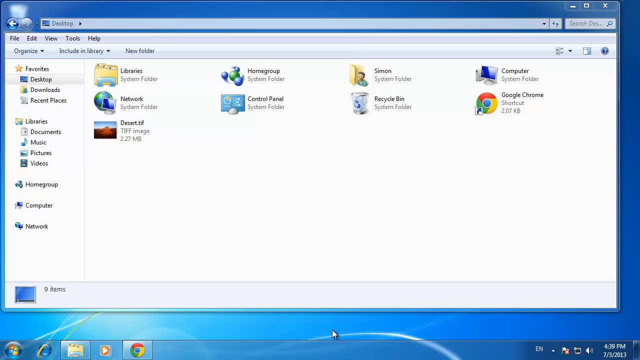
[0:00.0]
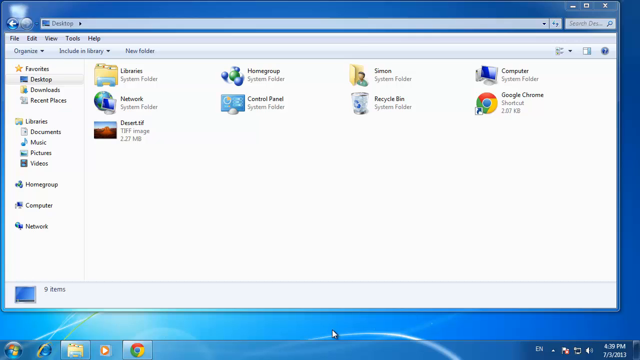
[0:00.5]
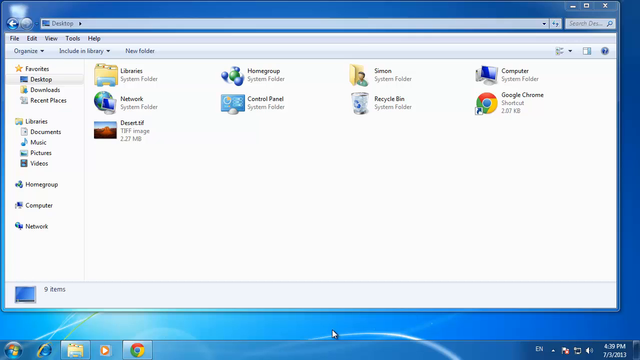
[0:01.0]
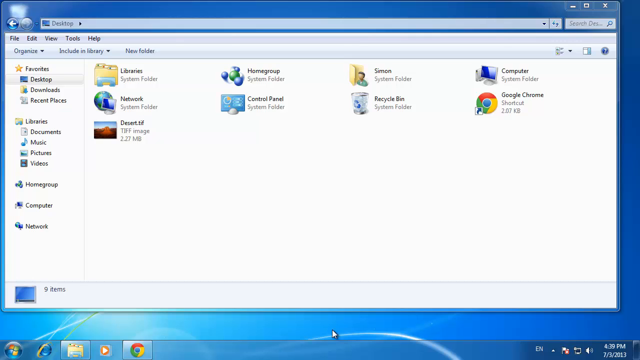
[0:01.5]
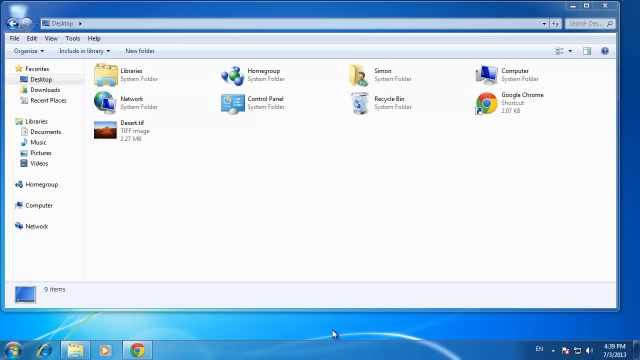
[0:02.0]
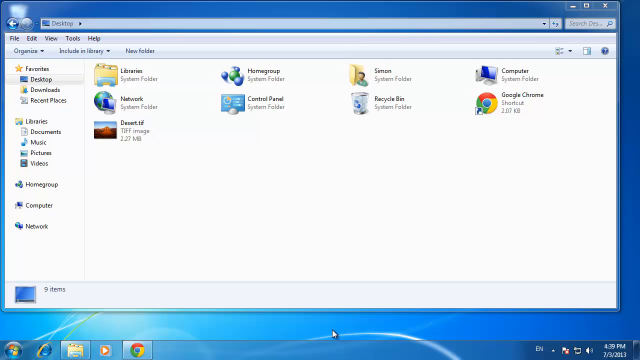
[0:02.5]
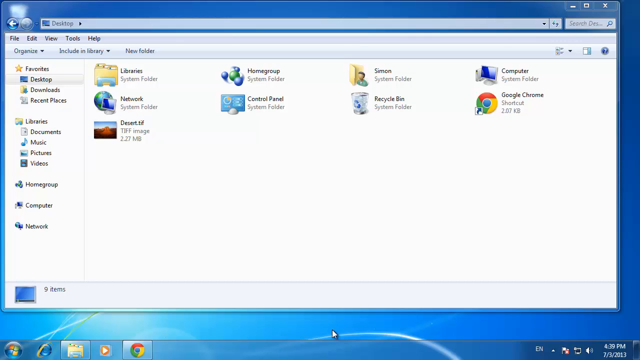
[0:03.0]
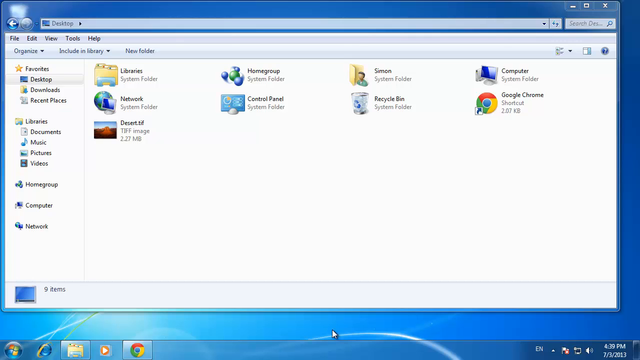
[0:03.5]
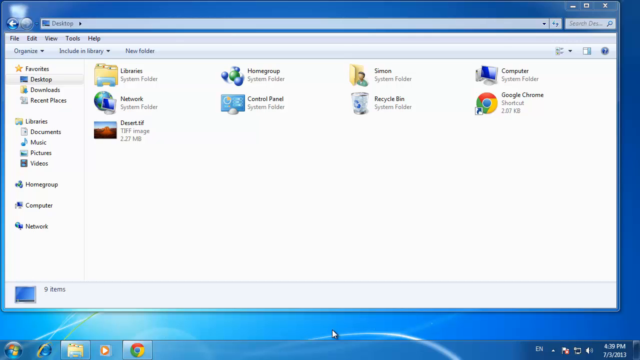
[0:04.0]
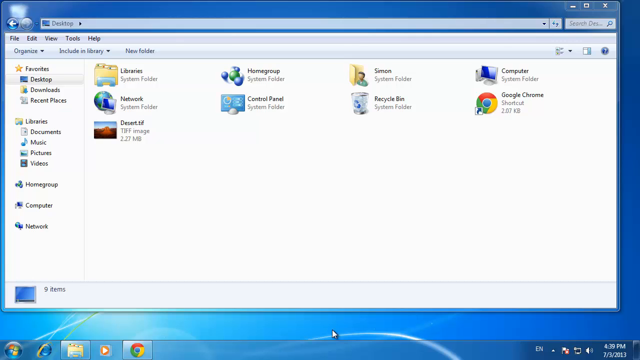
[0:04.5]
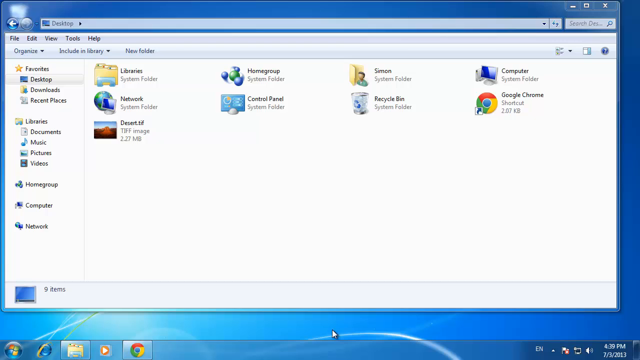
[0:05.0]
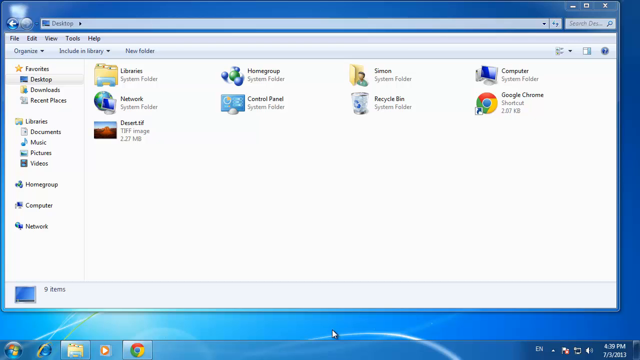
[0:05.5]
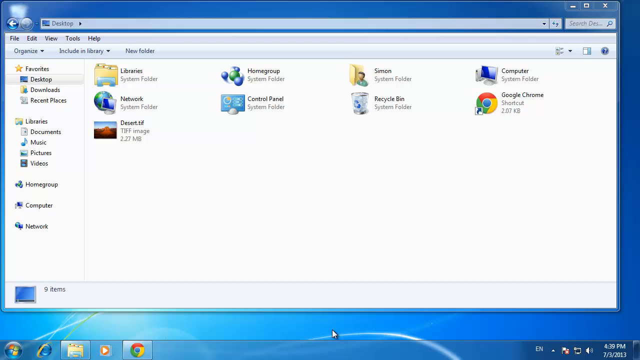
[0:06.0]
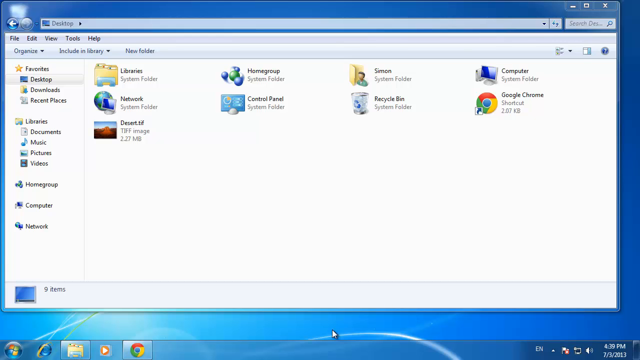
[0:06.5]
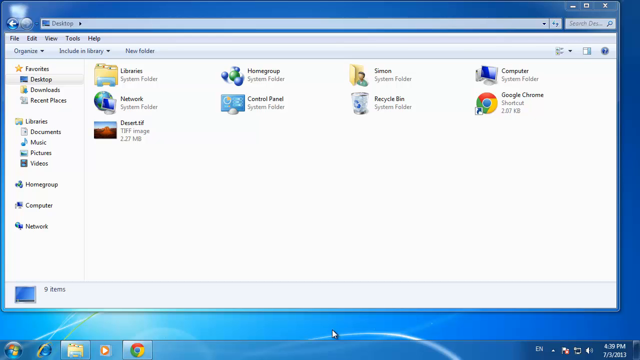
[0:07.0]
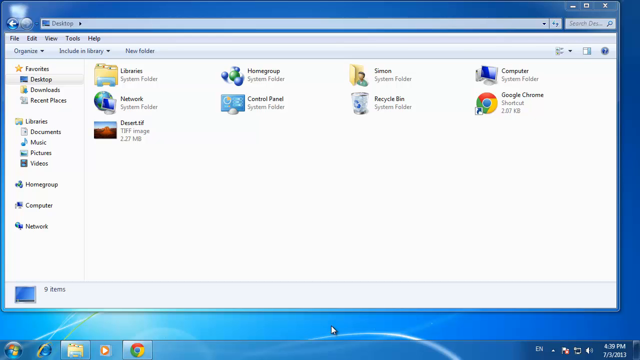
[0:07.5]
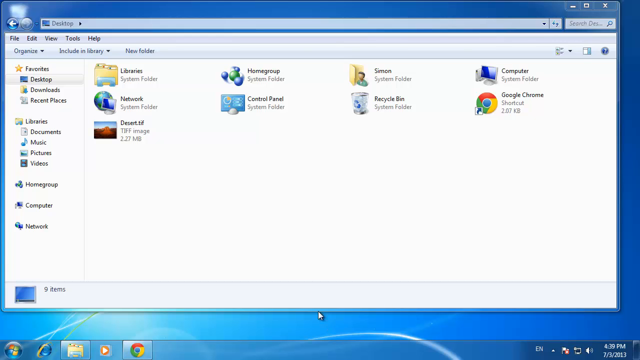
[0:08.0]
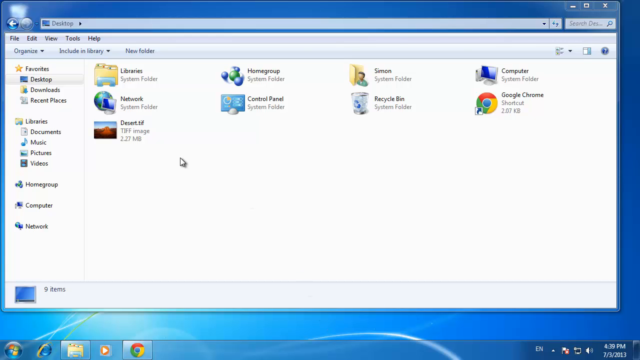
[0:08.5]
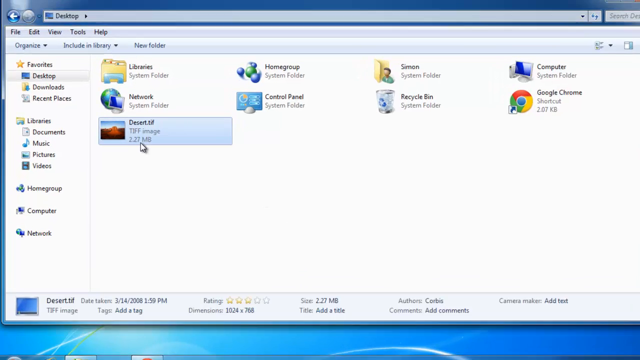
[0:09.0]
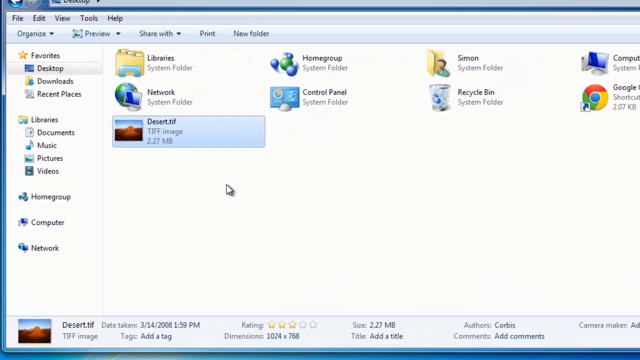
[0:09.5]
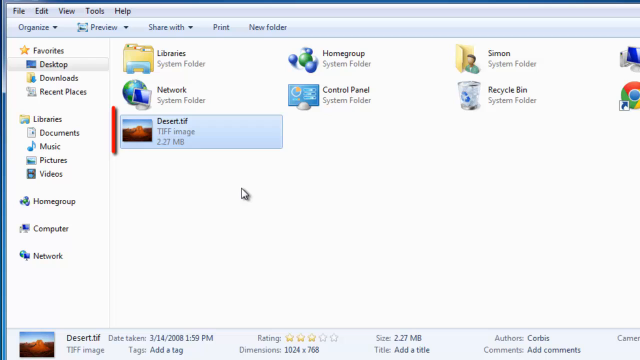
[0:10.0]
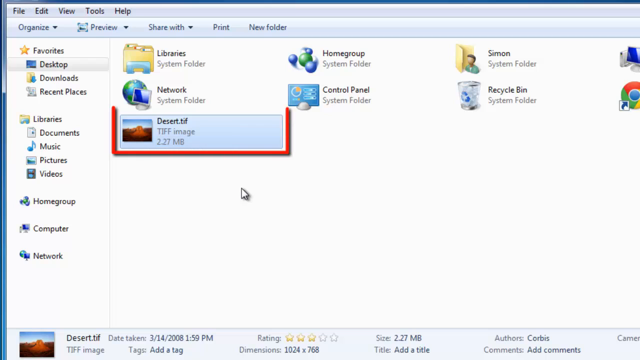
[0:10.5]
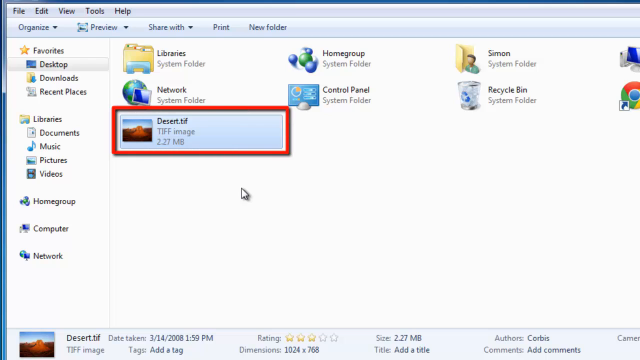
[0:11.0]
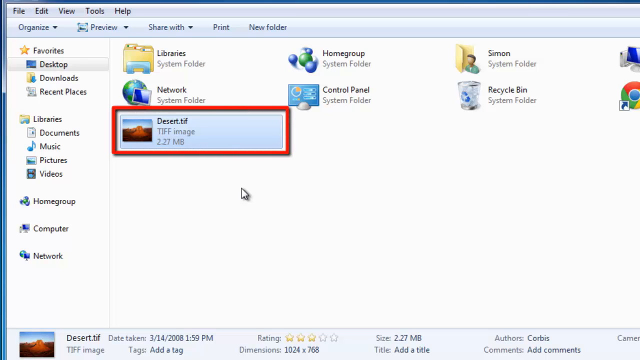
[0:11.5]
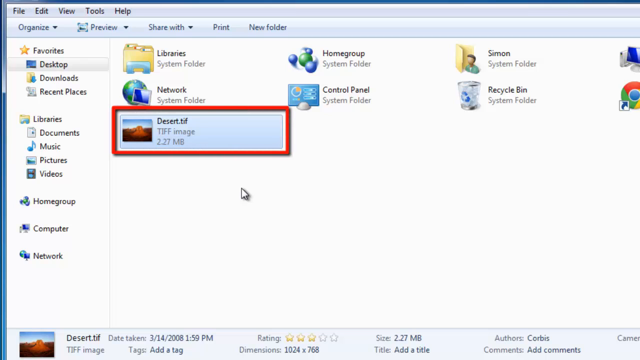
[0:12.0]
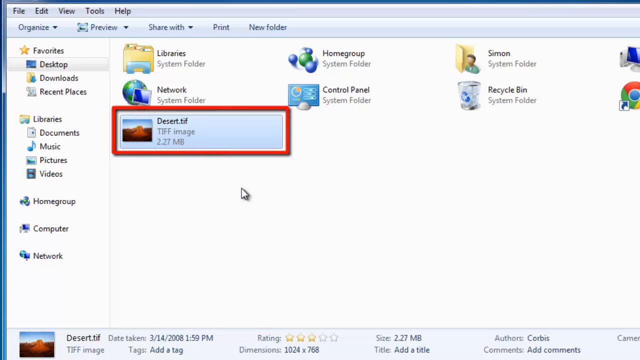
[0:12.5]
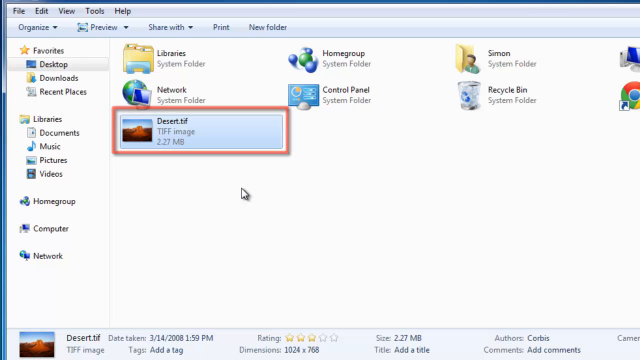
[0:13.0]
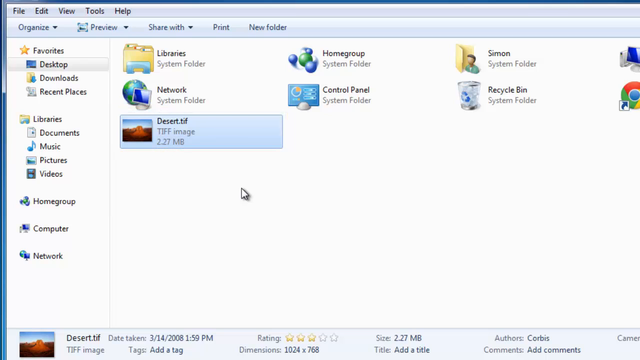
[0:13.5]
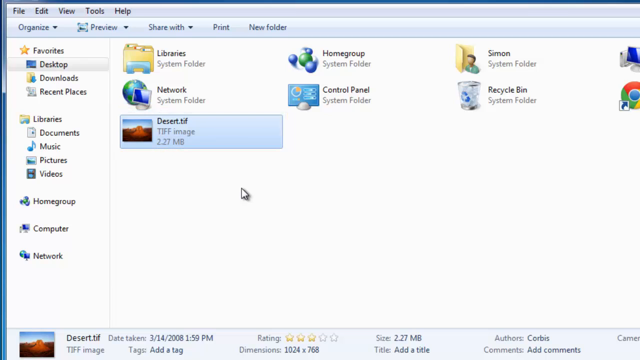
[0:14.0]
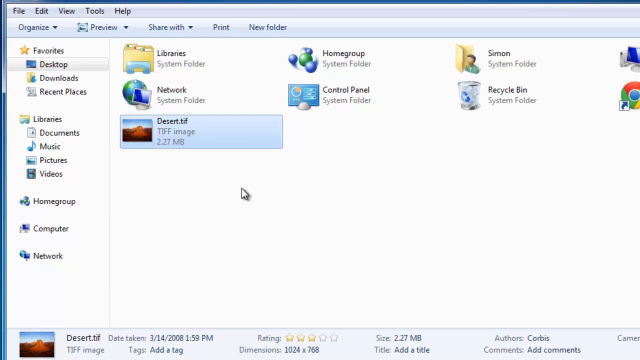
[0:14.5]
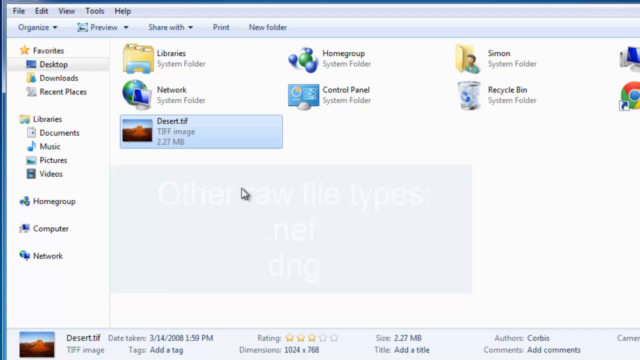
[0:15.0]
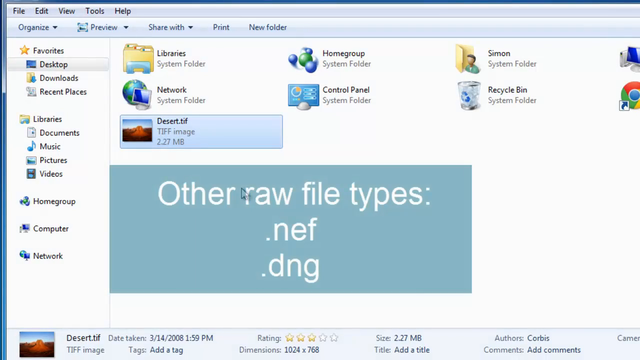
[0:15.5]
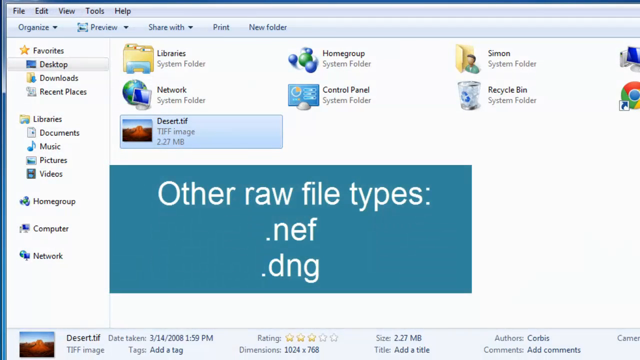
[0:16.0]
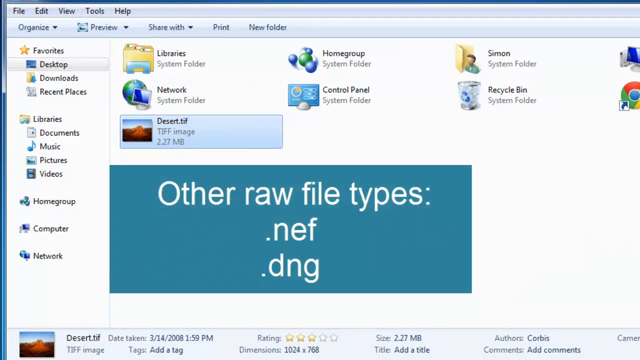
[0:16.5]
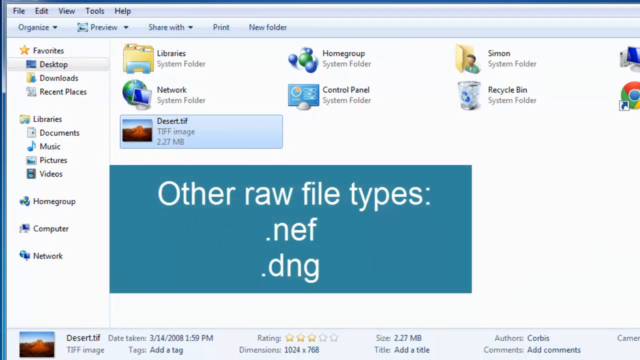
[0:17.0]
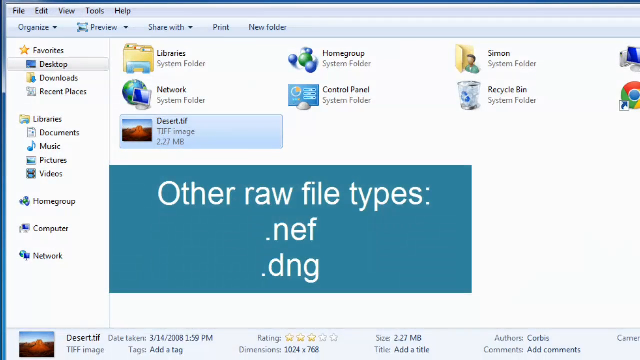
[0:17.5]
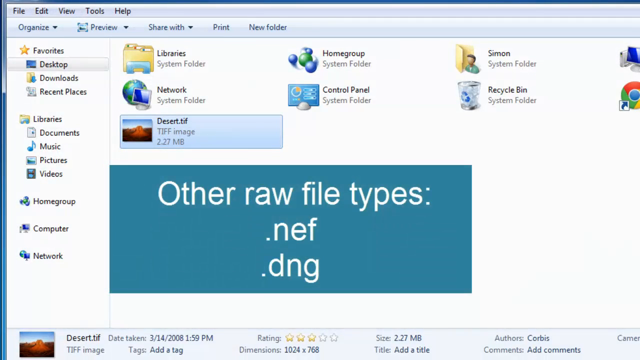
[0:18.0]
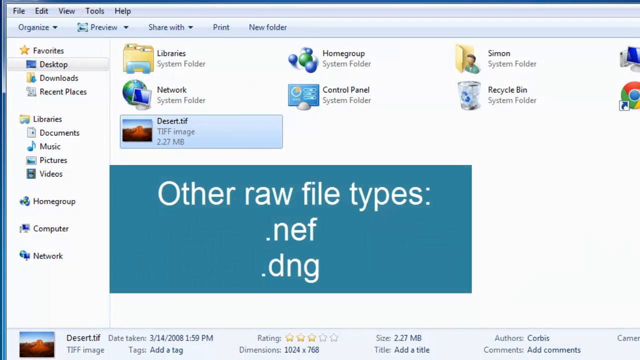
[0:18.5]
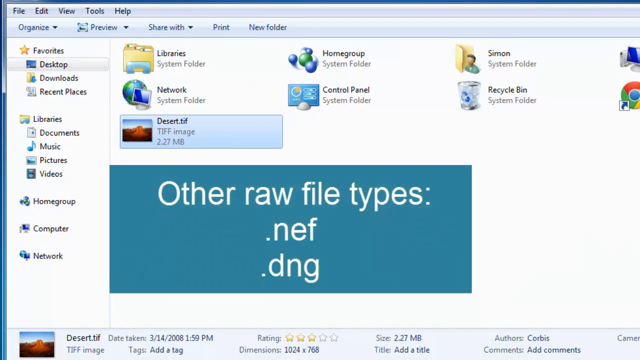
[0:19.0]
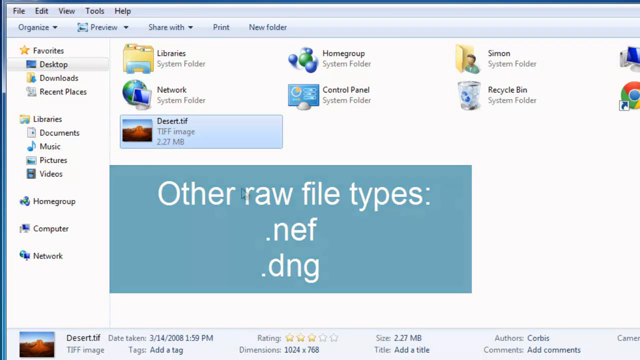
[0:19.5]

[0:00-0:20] A computer screen shows someone in their organized library clicking on "desert TIF", a picture of the desert, which they kind of circle in red. Text then reads "other raw file types .nef .DNG". The person appears to be preparing to get the picture to do something with it; no people are visible on screen.